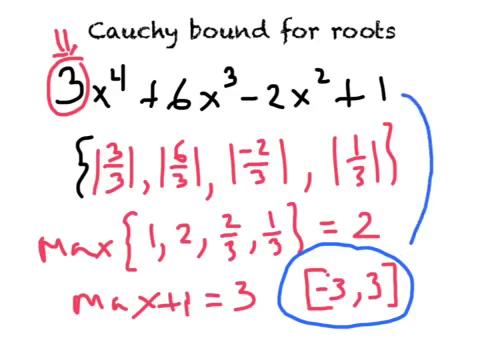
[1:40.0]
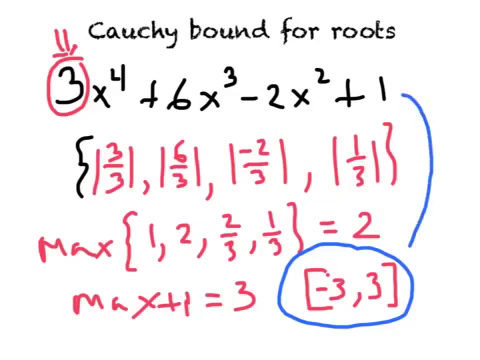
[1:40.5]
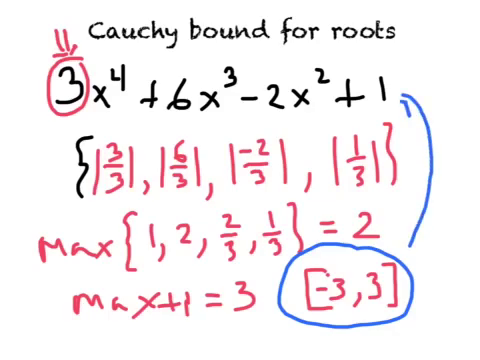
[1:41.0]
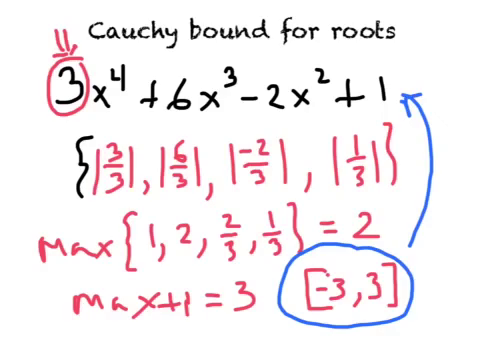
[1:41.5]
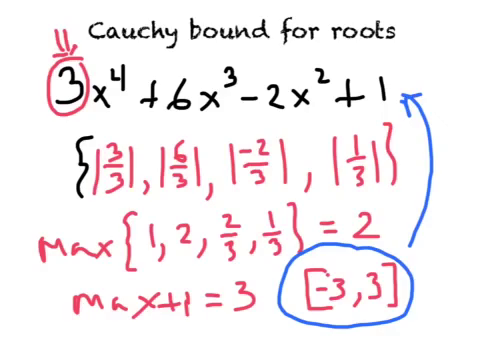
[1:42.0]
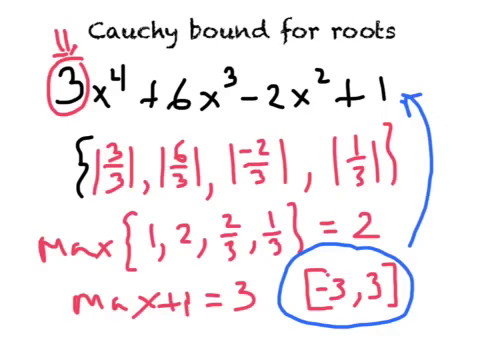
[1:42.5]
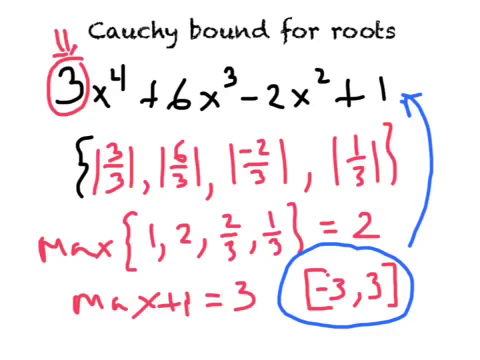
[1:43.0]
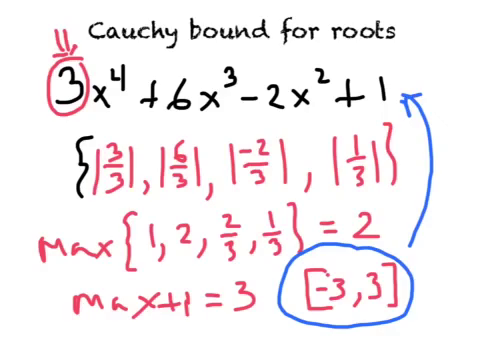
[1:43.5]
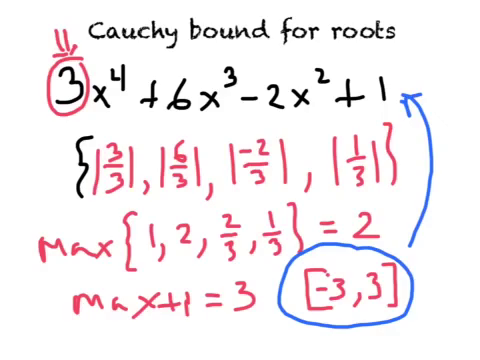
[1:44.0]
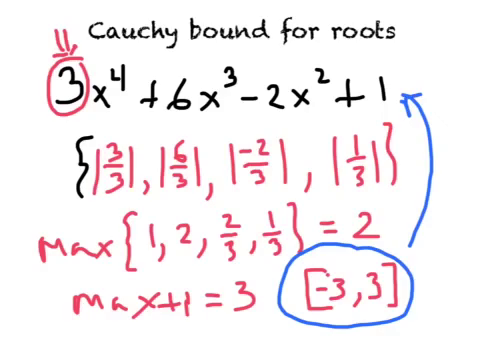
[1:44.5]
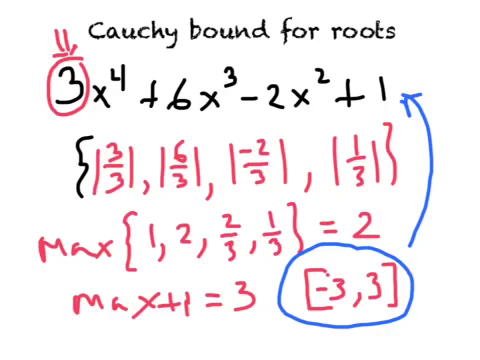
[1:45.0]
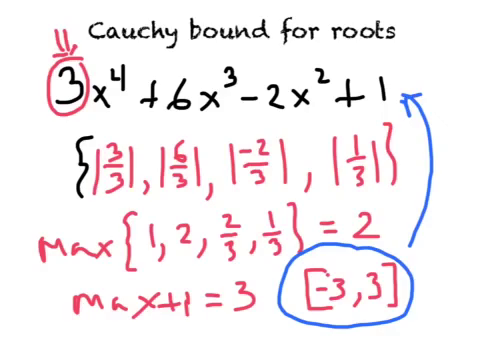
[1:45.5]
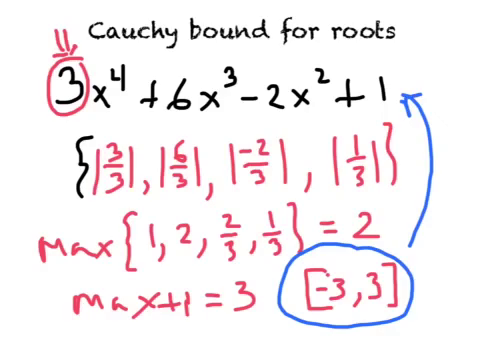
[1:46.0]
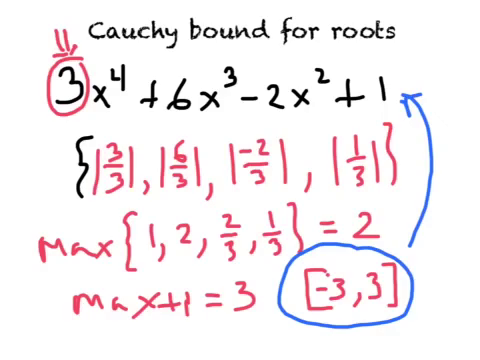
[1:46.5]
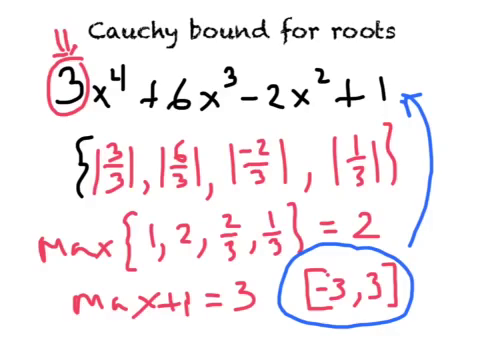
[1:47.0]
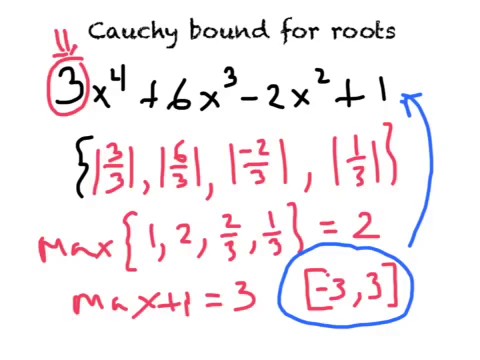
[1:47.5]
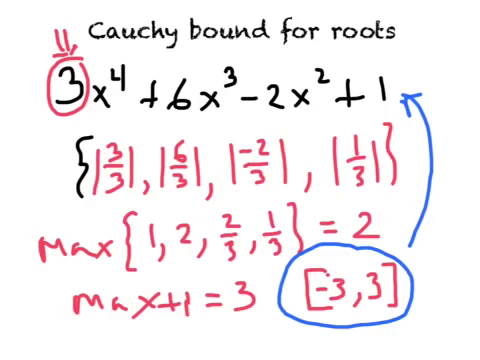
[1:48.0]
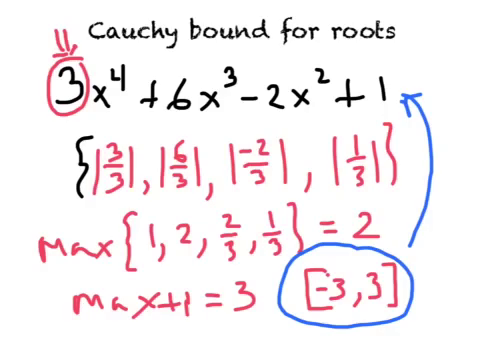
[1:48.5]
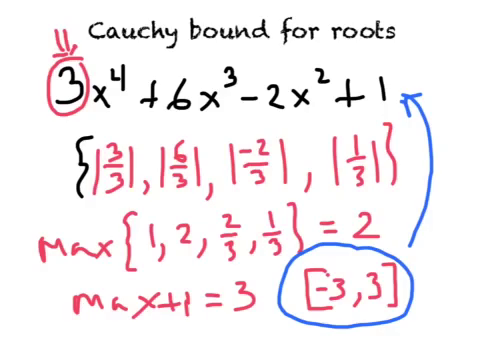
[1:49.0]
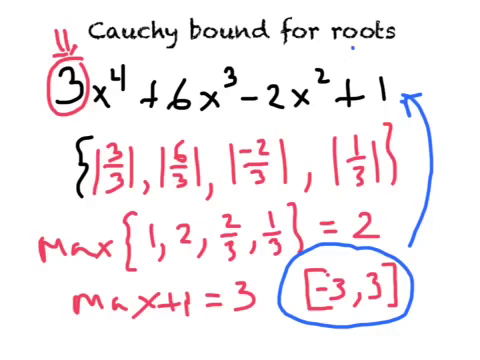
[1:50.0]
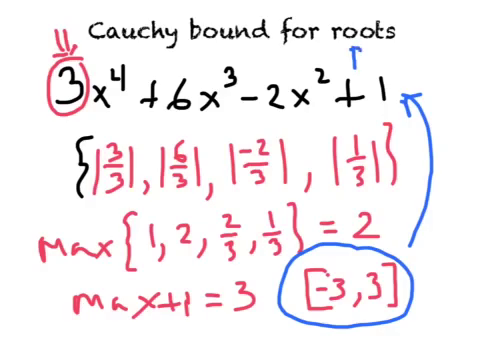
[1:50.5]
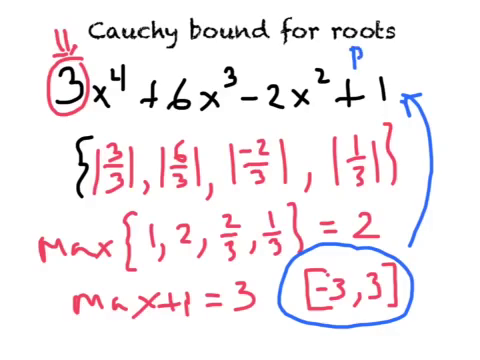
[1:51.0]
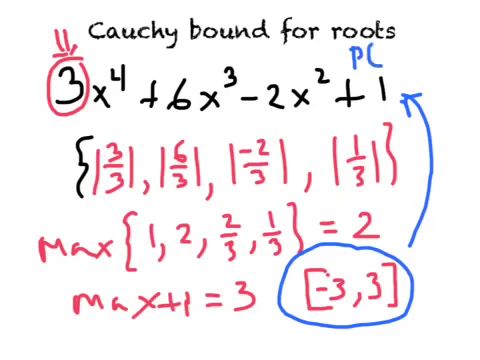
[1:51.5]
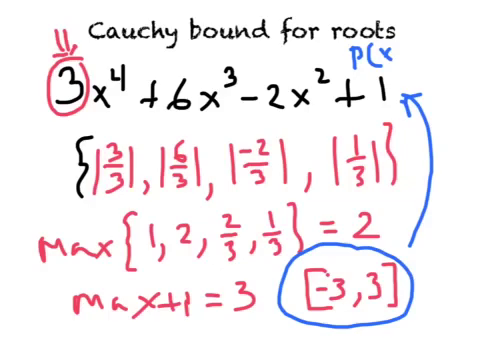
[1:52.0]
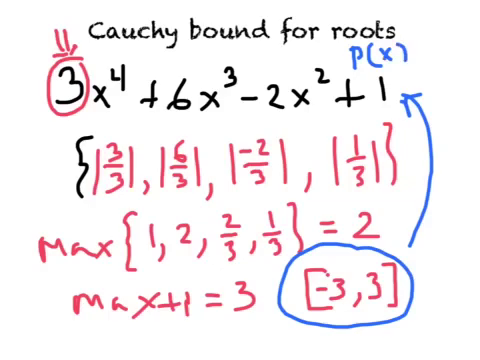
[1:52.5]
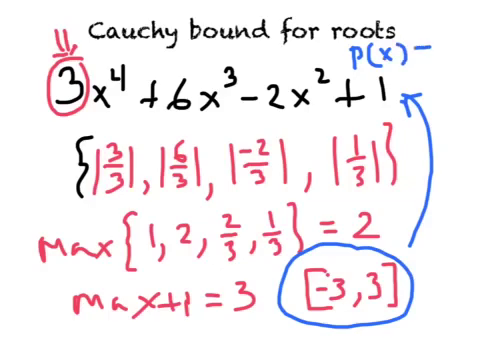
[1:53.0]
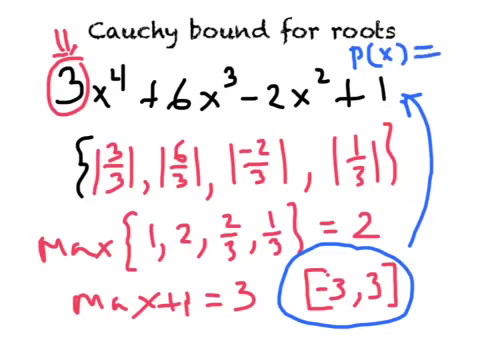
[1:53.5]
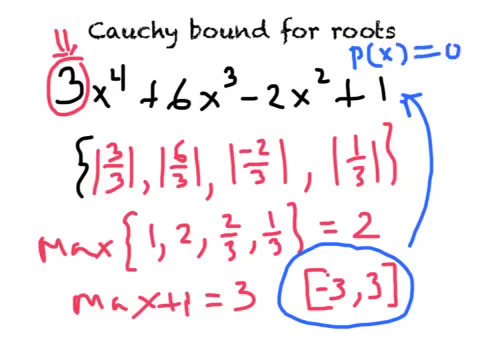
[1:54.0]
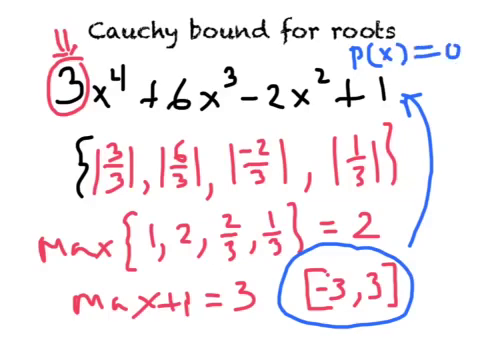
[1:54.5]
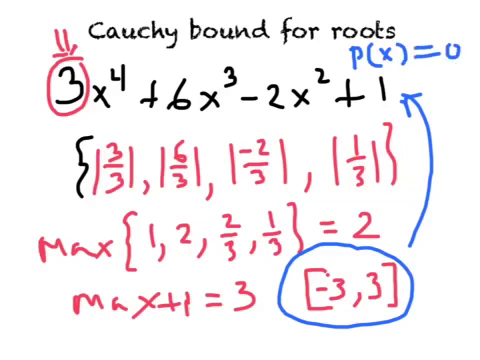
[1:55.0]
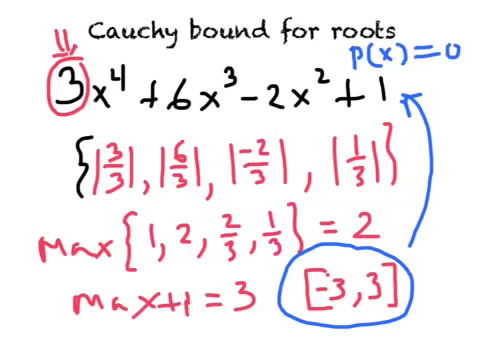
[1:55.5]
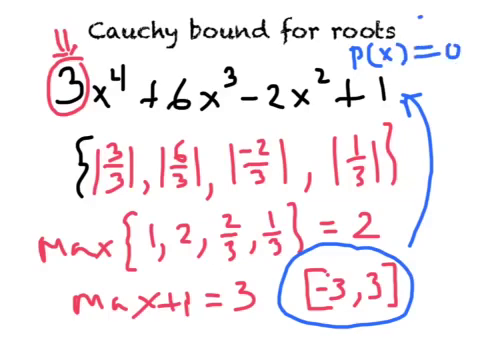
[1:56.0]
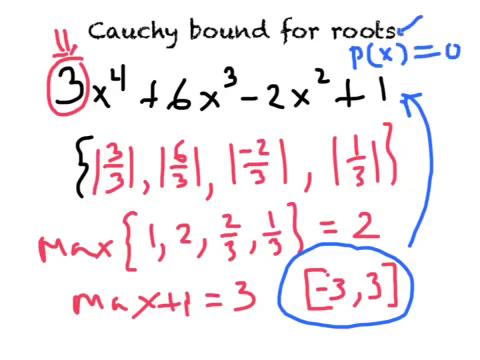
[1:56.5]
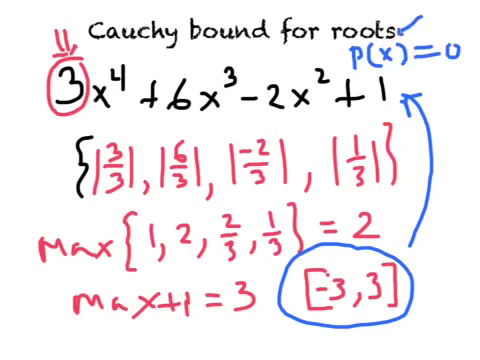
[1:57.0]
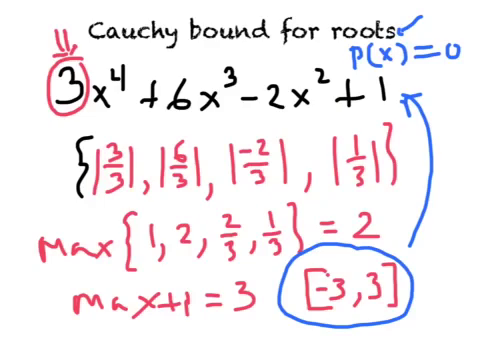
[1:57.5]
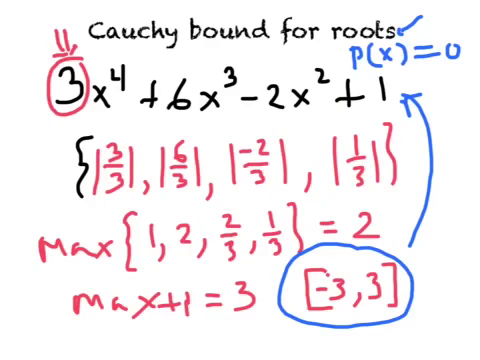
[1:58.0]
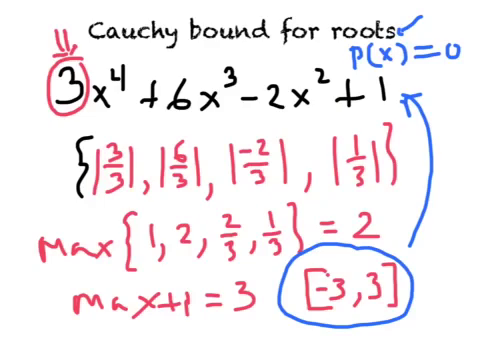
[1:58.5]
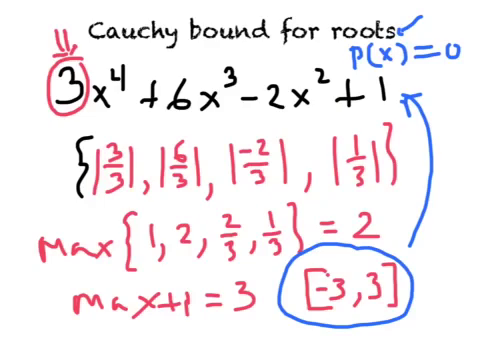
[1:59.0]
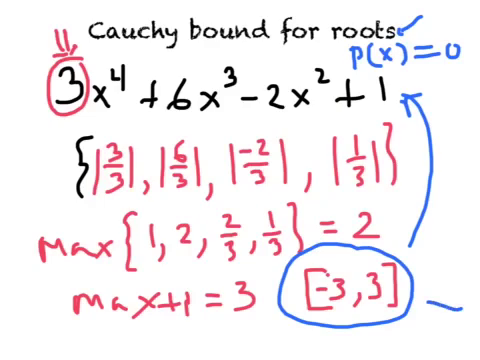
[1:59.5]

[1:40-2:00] Five lines have been written on the page in black, red and blue, with a parenthesis around lines 2 through 4. An arrow is added from the blue-circled bracketed −3, 3 at the bottom, pointing up to the second line, and P(x) = 0 is written above the second line. A dashed line is also drawn after the word "roots" in the title "Cauchy bound for roots", followed by an arrow toward the bracketed −3, 3 at the bottom.